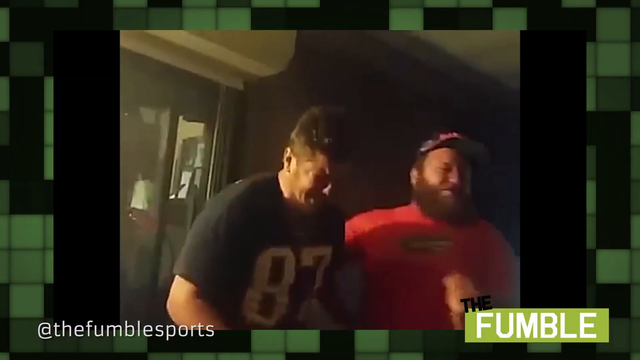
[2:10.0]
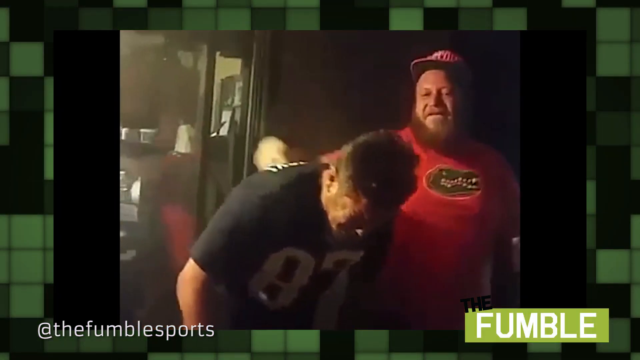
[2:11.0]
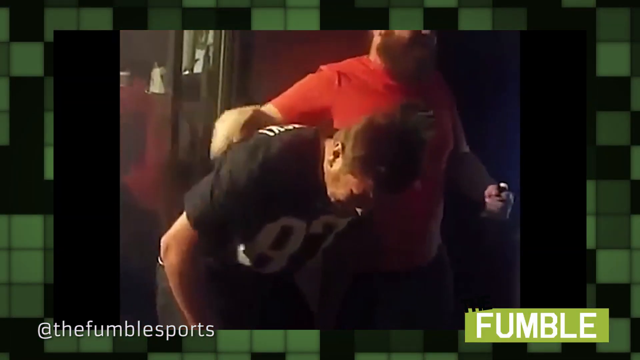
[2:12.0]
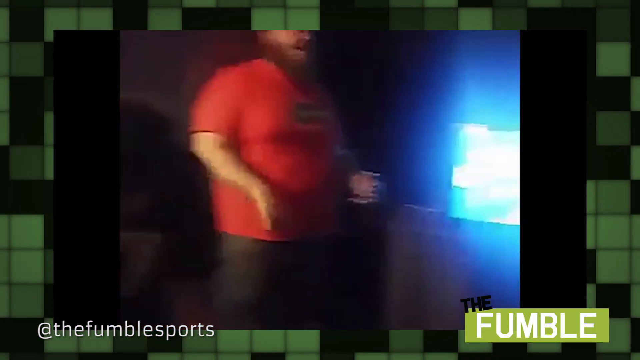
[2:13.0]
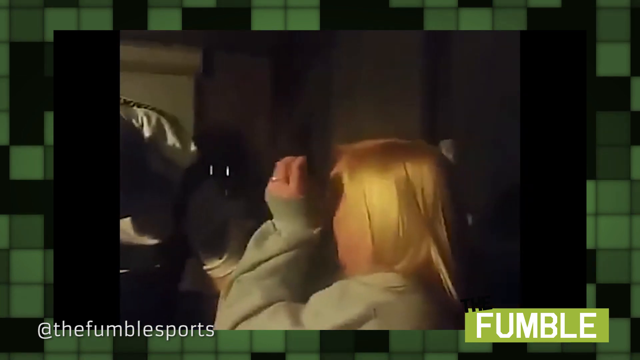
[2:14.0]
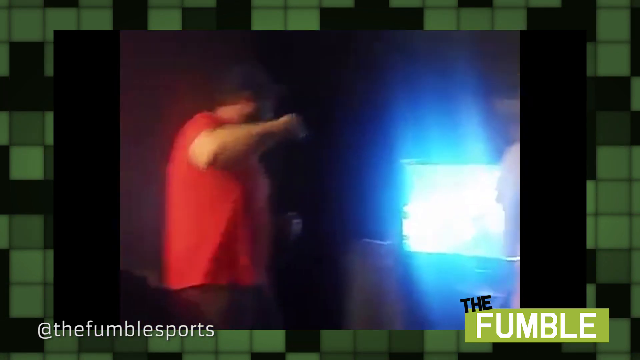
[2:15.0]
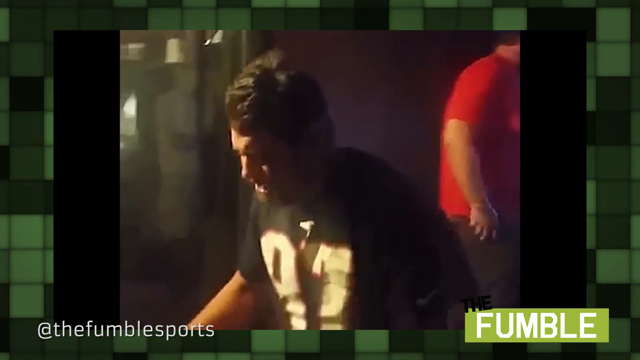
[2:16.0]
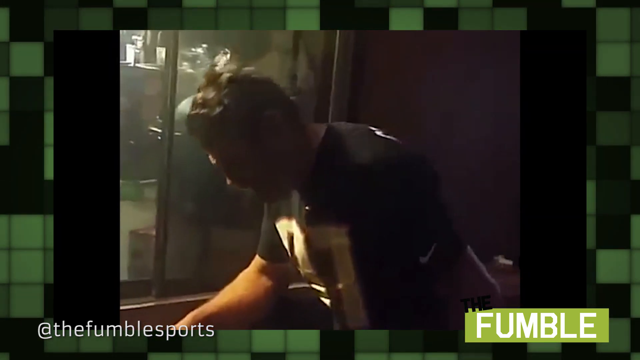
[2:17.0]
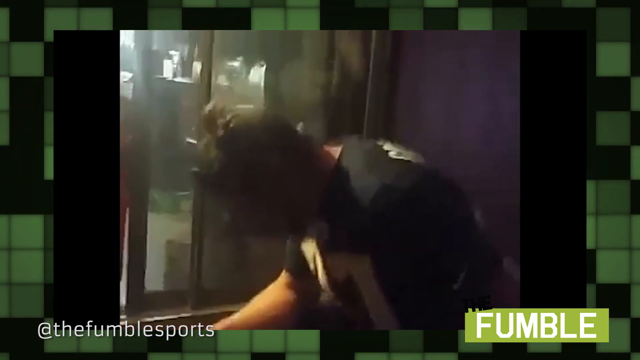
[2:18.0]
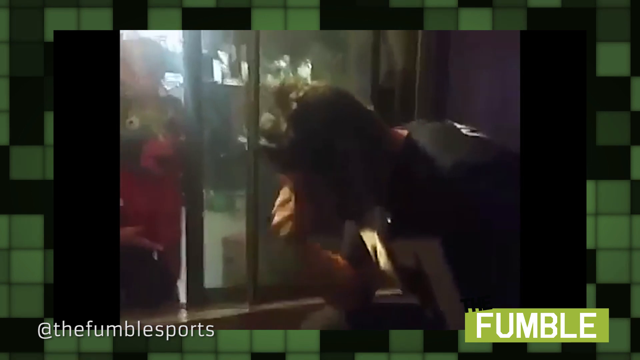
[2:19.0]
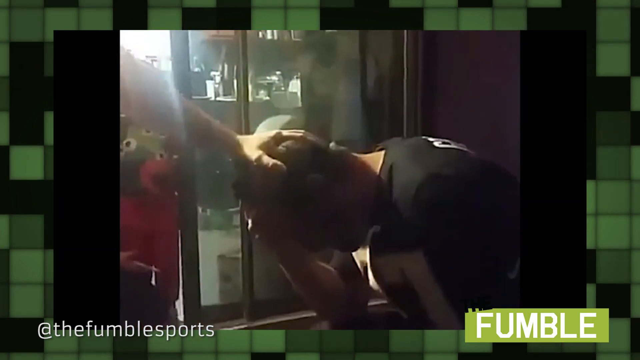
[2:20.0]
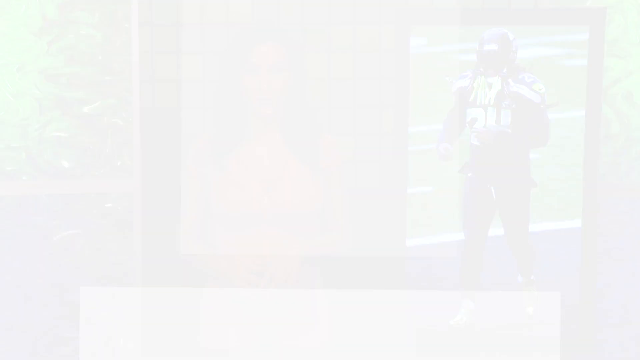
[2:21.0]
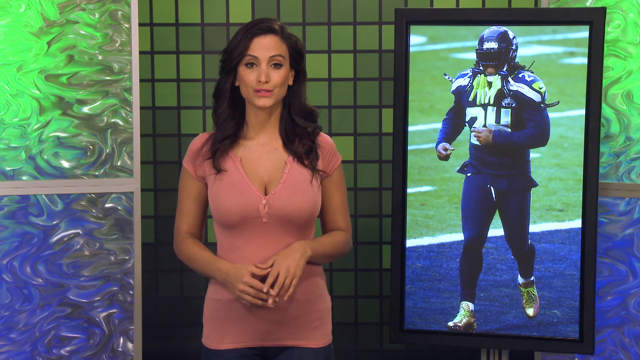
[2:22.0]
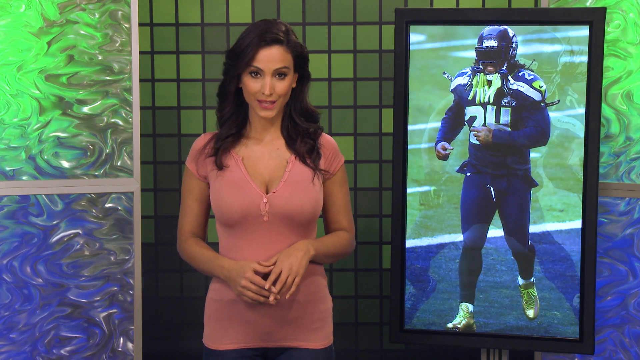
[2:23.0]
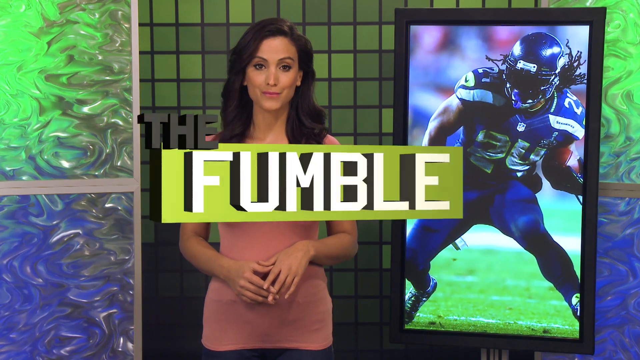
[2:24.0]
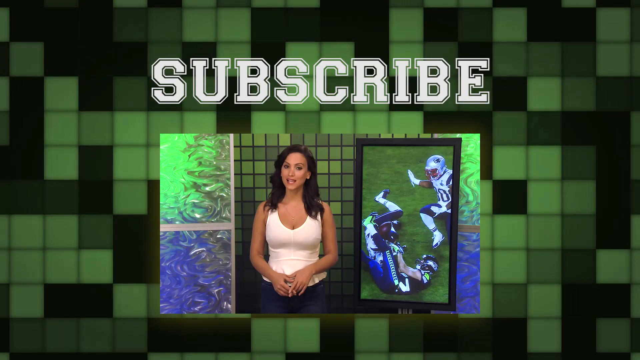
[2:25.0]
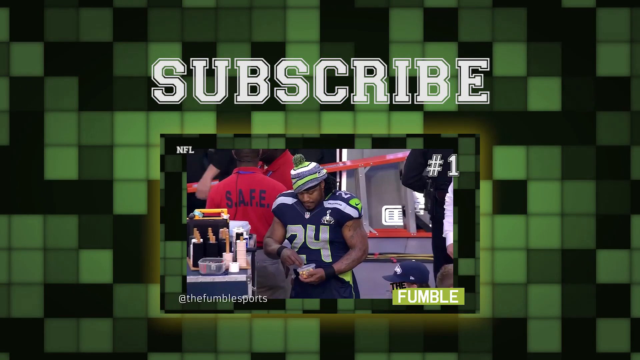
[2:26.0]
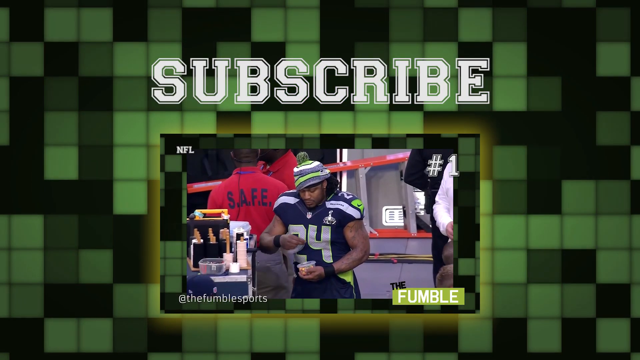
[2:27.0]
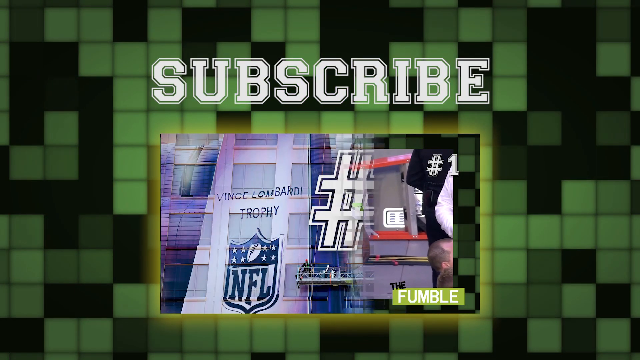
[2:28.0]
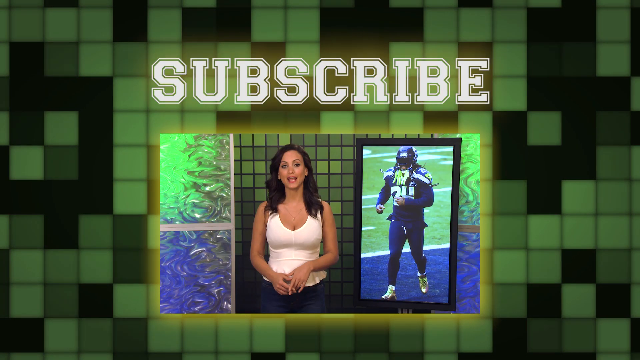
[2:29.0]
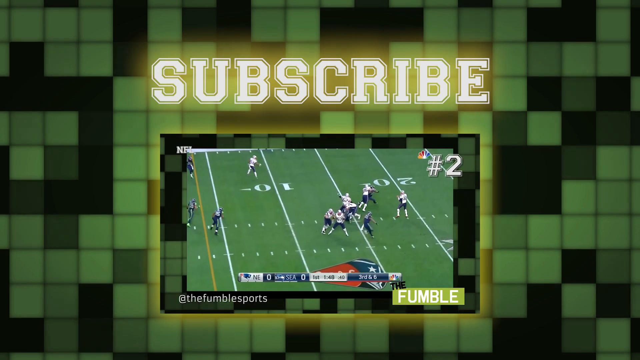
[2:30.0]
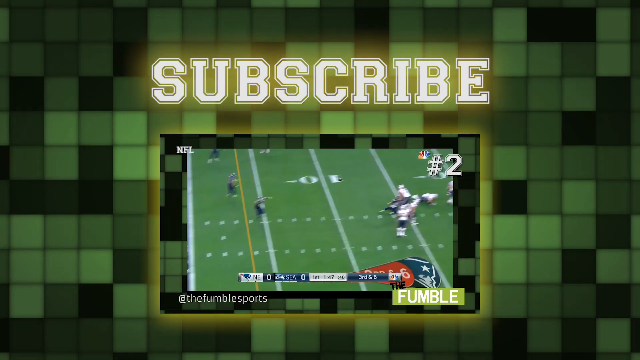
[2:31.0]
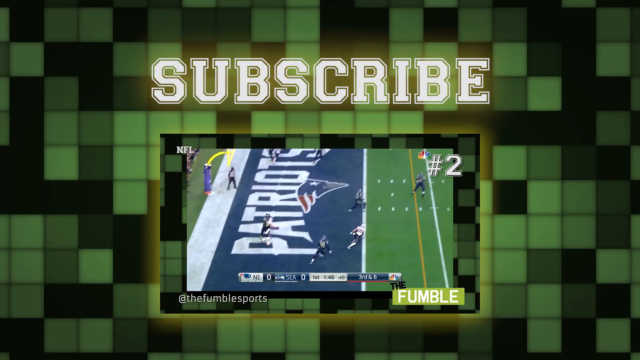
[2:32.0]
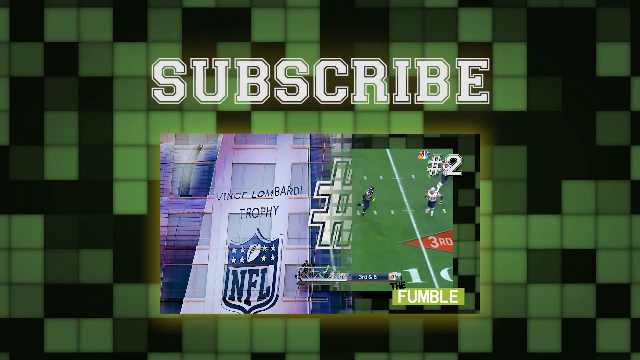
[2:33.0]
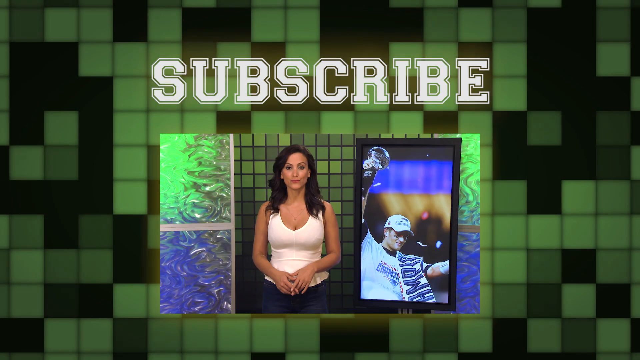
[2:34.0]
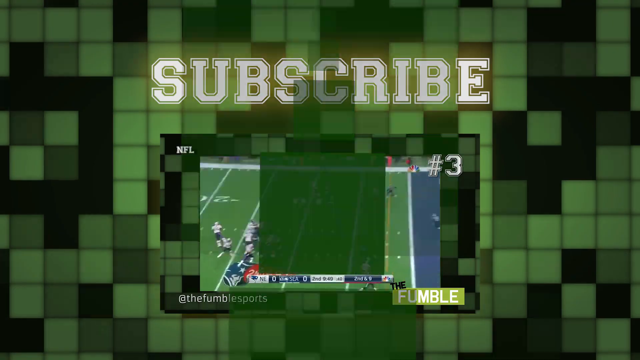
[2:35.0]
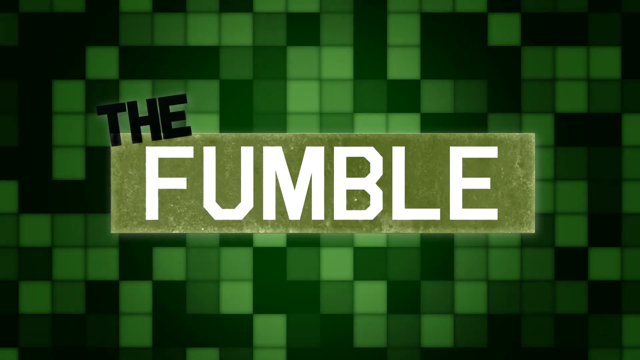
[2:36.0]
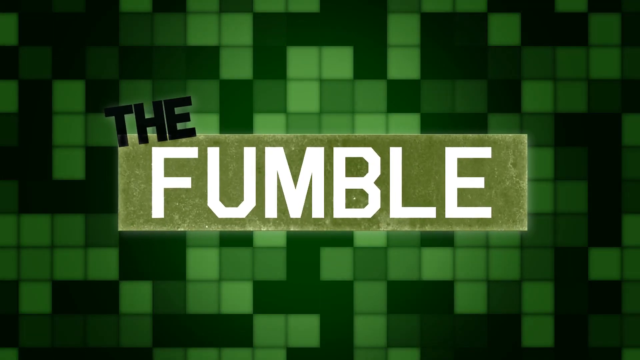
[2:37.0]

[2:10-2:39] Two friends appear, apparently upset. The man on the left is hunched over and looks like he is about to tear up; the man on the right wears a red shirt and has a beard. The camera rotates to the right to show a blonde woman covering her eyes. The camera footage is fairly low quality. The view returns to the man kneeling over, who appears upset and now has his hands over his face, and a hand comes out and pats him on the top of the head. The camera cuts back to Crystal, the female reporter, with a closing image on the right of Marshawn Lynch, the Seattle Seahawks running back at the time, tucking the football on his left-hand side. Then "the fumble" appears in the center of the screen, followed by the closing screen, which has "subscribe" at the top and a clip of Crystal in a white shirt reviewing another video.